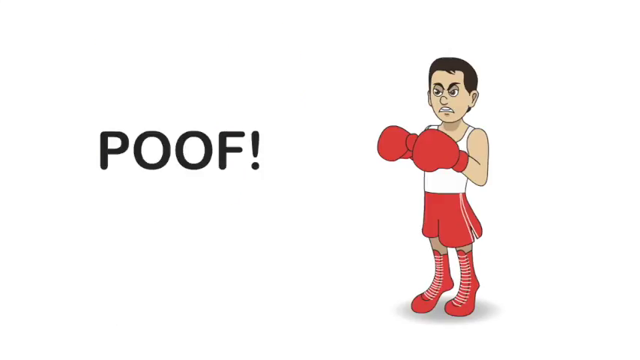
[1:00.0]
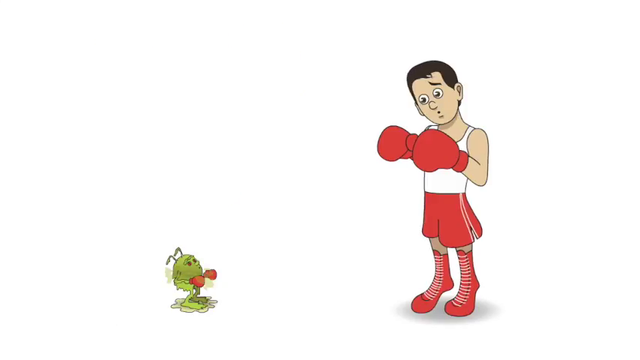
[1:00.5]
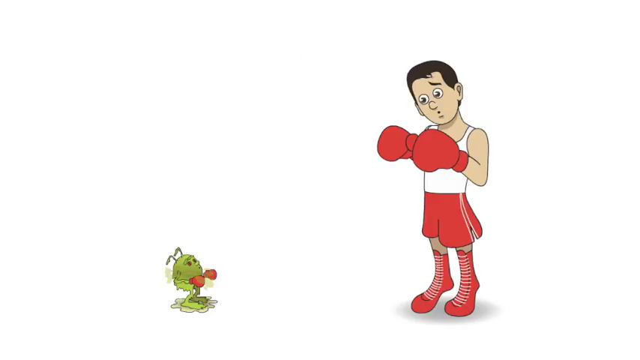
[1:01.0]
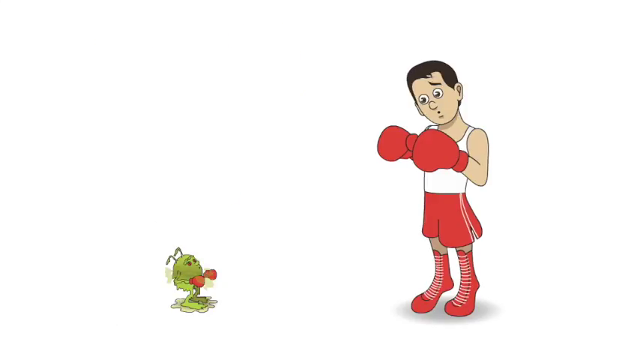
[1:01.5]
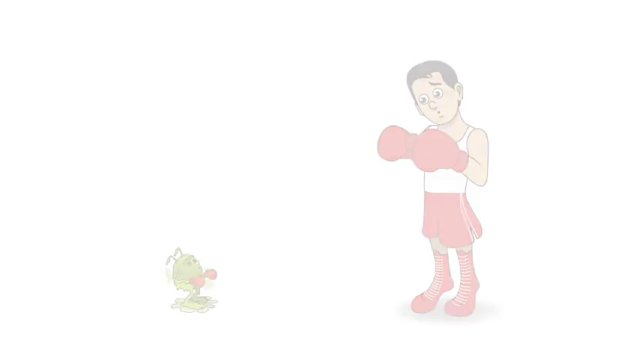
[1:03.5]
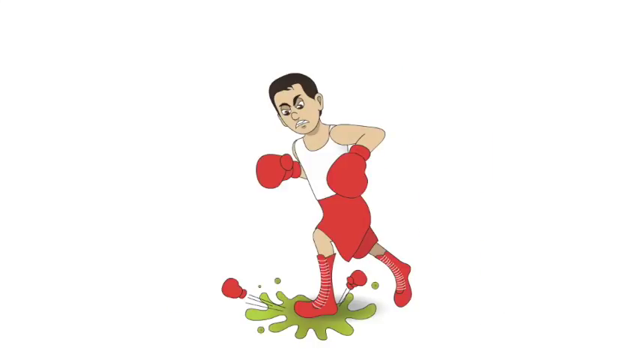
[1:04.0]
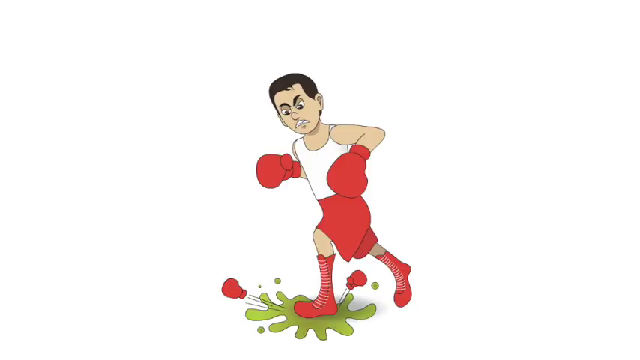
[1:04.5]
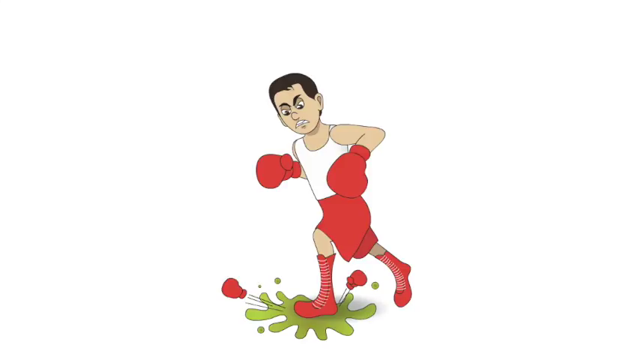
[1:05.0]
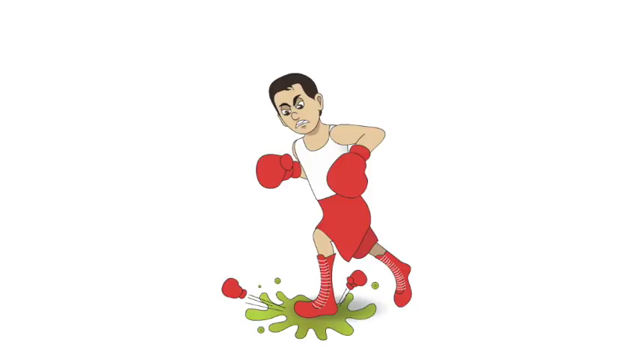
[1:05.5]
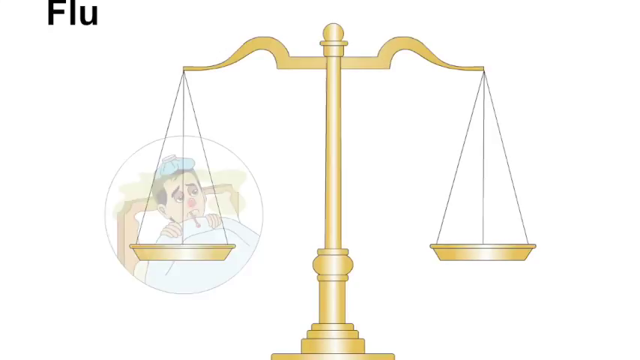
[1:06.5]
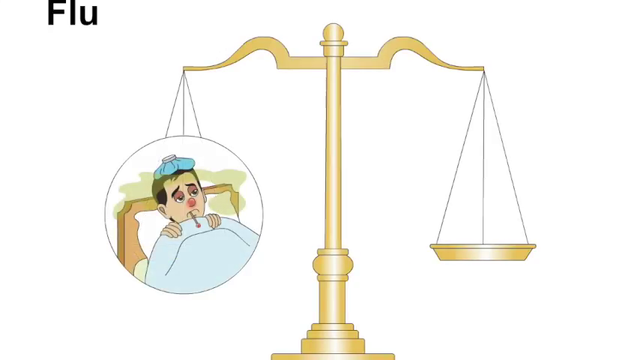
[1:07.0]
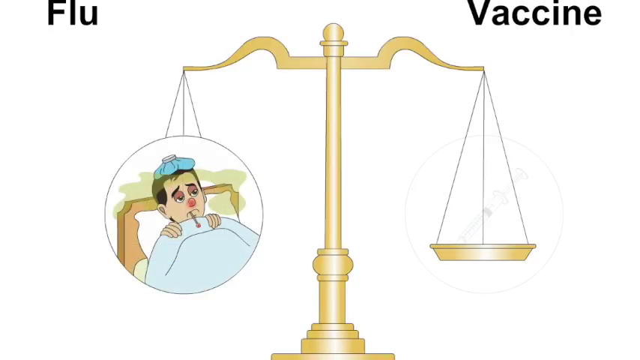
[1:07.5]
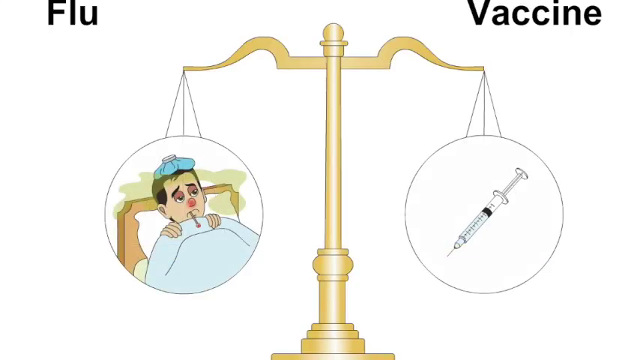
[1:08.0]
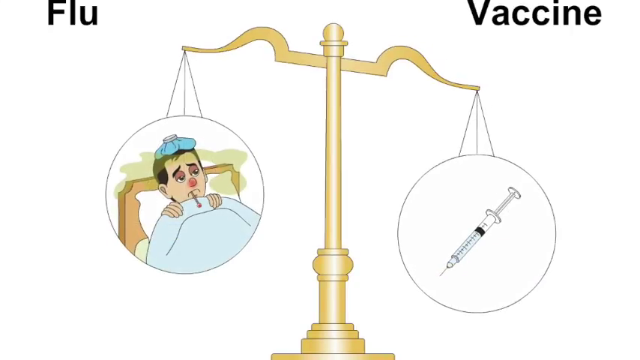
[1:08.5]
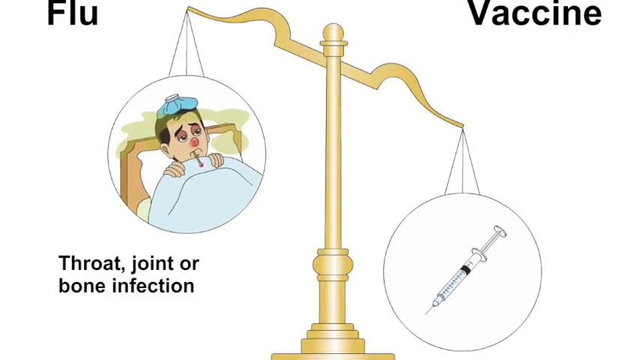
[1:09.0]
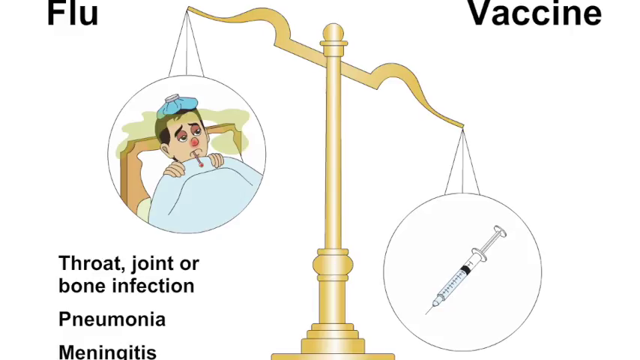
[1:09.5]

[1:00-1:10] A man in boxing gloves and boxing attire is on the screen, with the word "Poof" next to him on the left. A tiny green slimy creature wearing red boxing gloves appears in place of the word, looking up at the man, while the man looks at it with a confused expression. Next, the man stomps on green slime on the ground, and the little red boxing gloves pop up out of it. Scales then appear. On the left scale is an image of a man sick in bed with a thermometer in his mouth, an ice pack on his head, and a red nose, and the word "Flu" appears on the upper left of the screen. On the other side, the word "Vaccine" appears with a hypodermic needle on the scale. The scale tips in the direction of the hypodermic needle, and at the bottom left of the screen the text "Throat, joint, or bone infection" and "Pneumonia" appears.